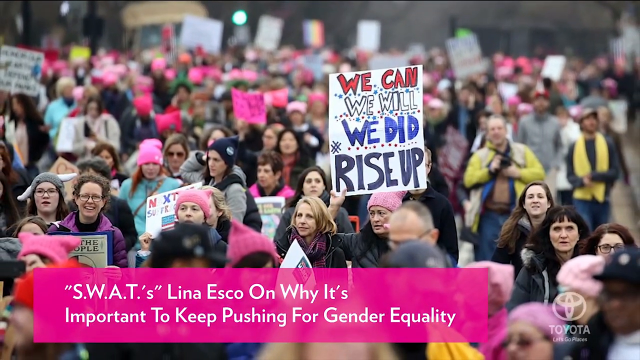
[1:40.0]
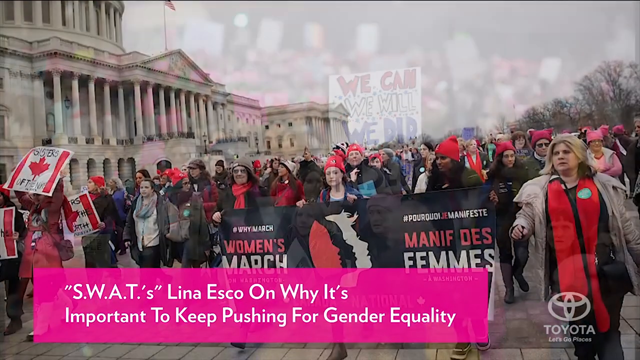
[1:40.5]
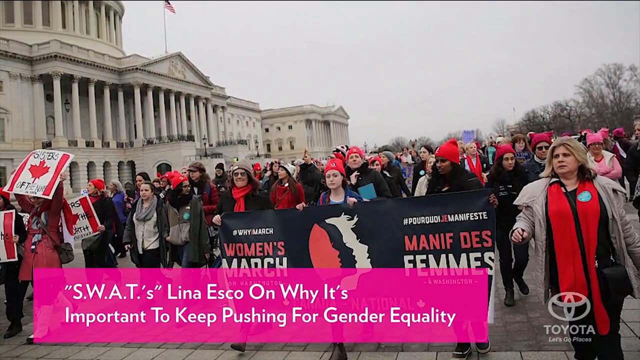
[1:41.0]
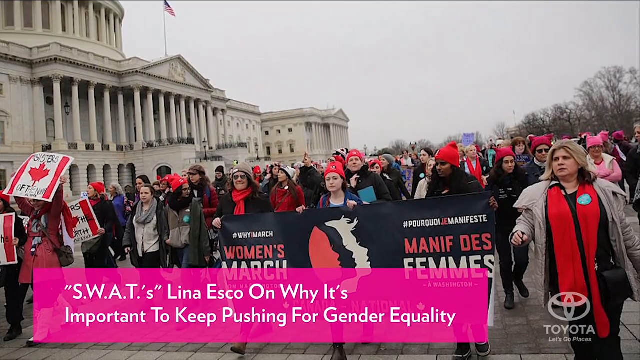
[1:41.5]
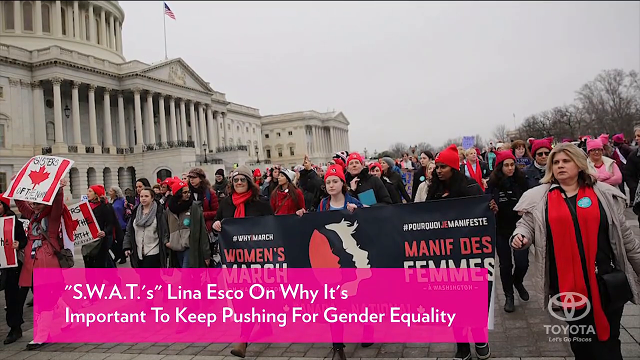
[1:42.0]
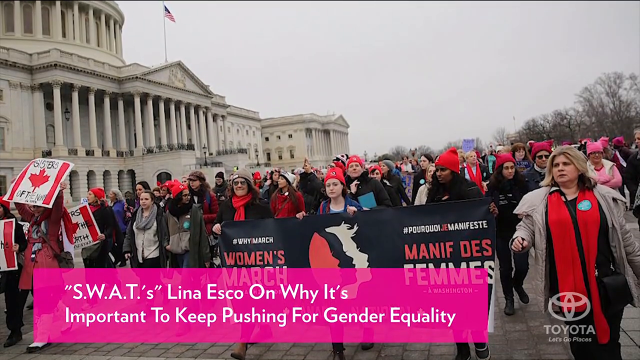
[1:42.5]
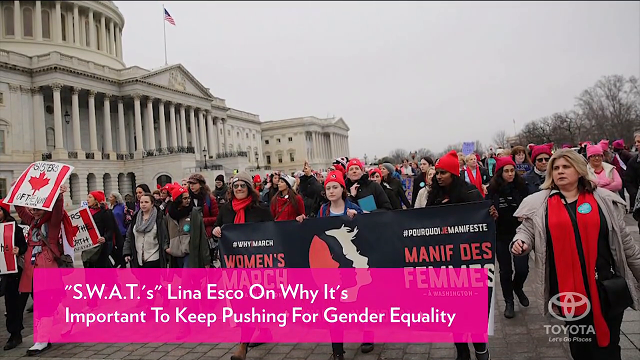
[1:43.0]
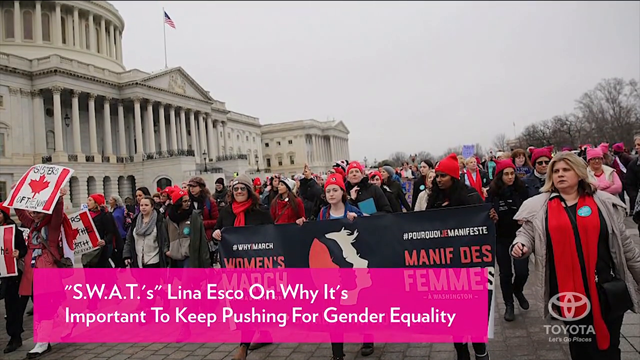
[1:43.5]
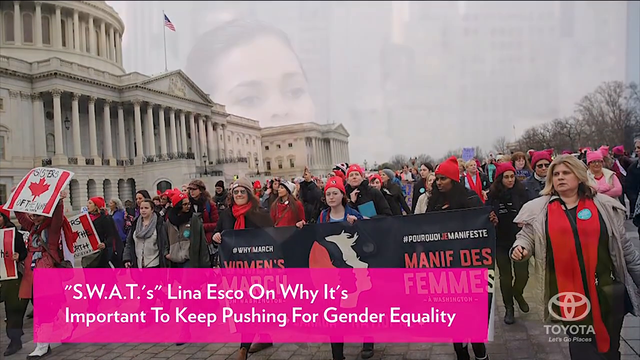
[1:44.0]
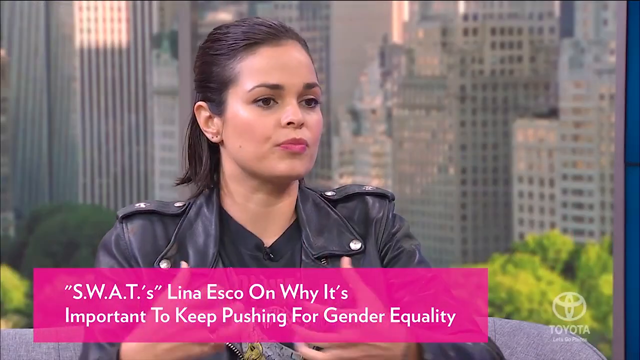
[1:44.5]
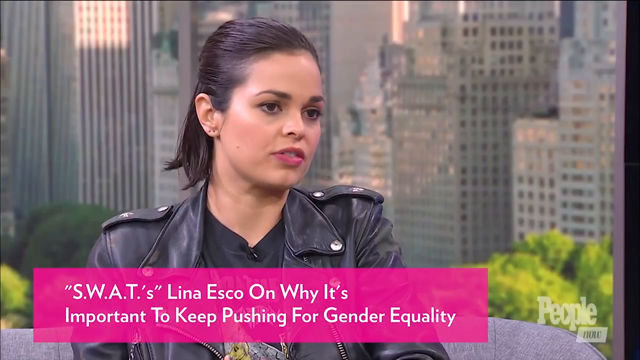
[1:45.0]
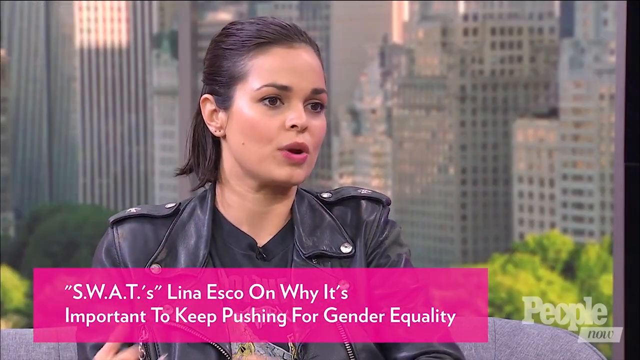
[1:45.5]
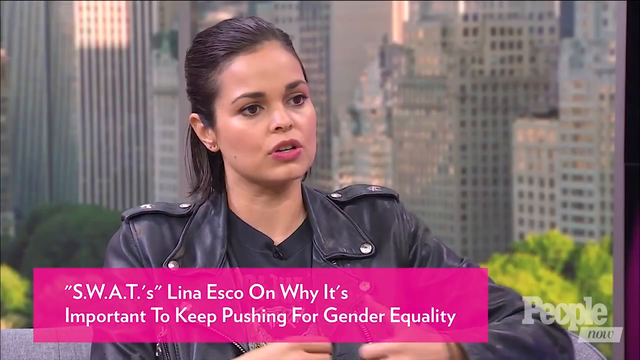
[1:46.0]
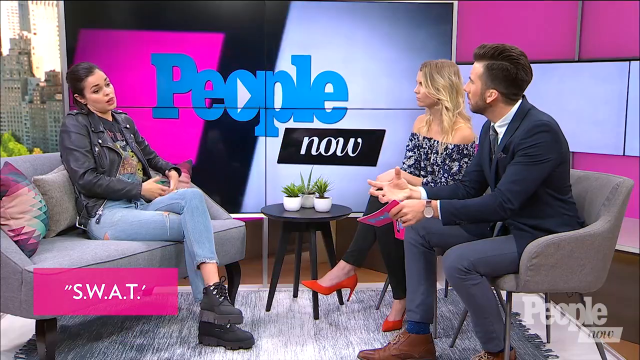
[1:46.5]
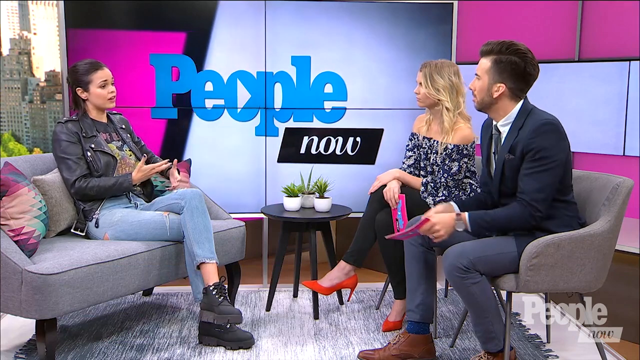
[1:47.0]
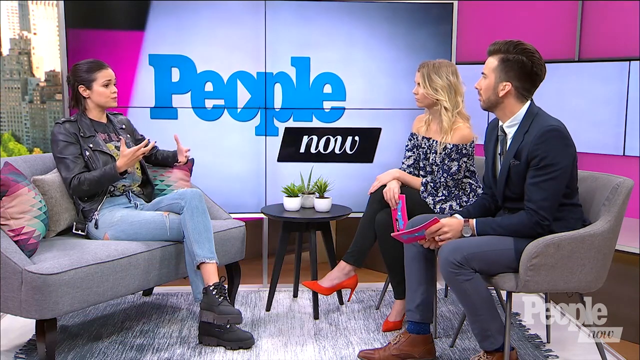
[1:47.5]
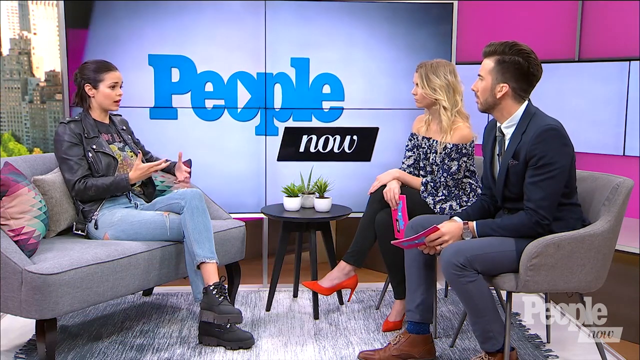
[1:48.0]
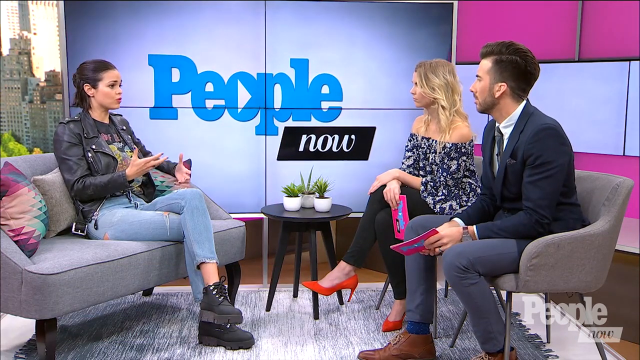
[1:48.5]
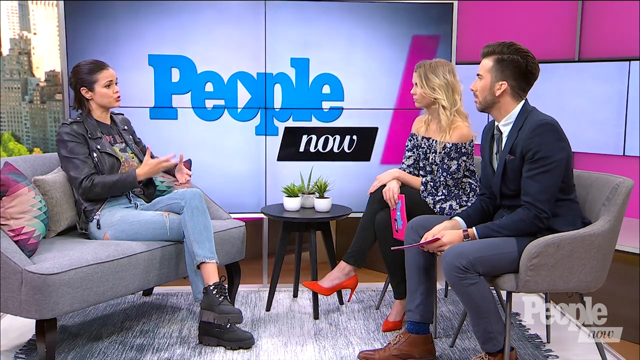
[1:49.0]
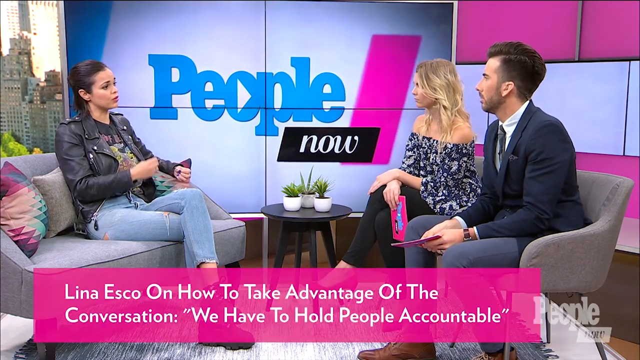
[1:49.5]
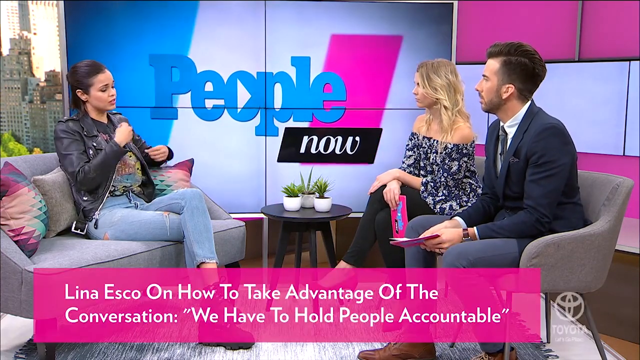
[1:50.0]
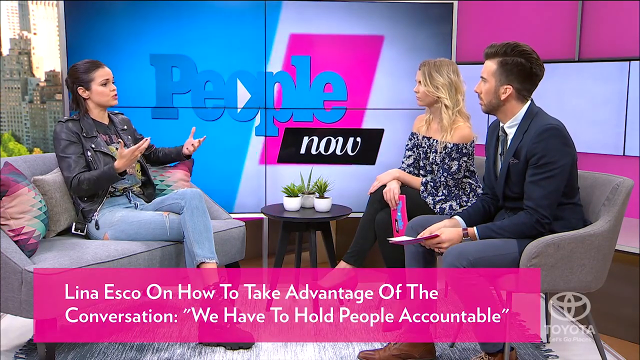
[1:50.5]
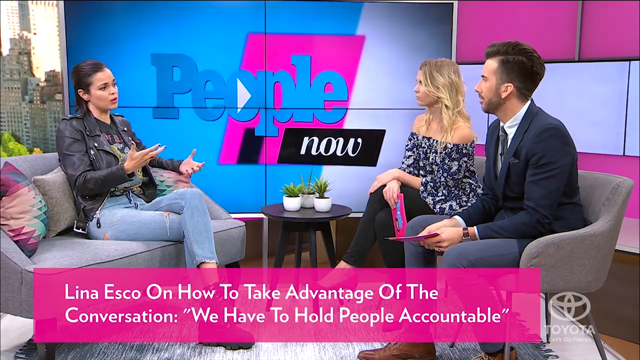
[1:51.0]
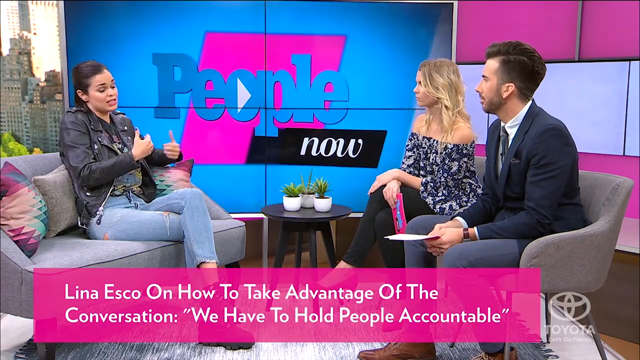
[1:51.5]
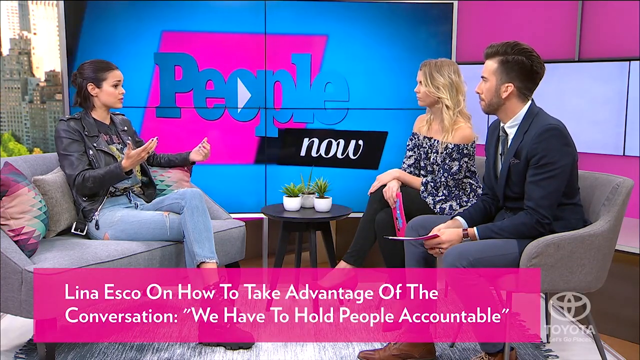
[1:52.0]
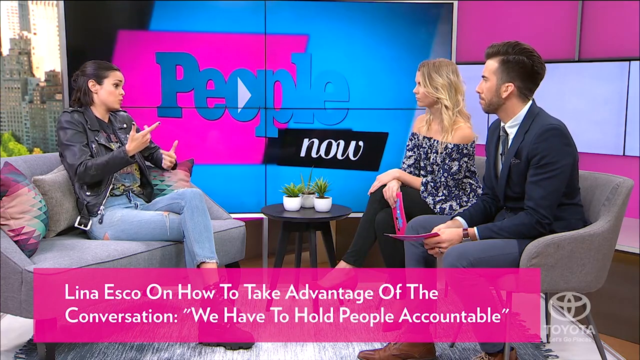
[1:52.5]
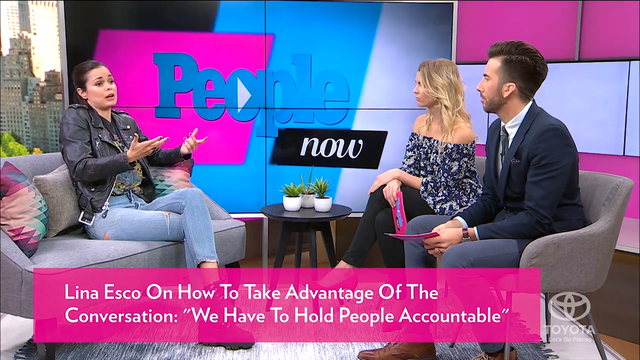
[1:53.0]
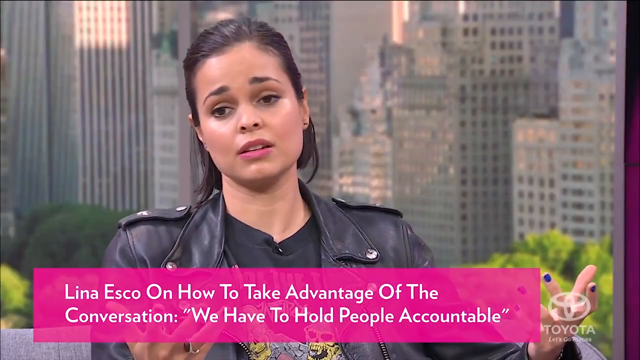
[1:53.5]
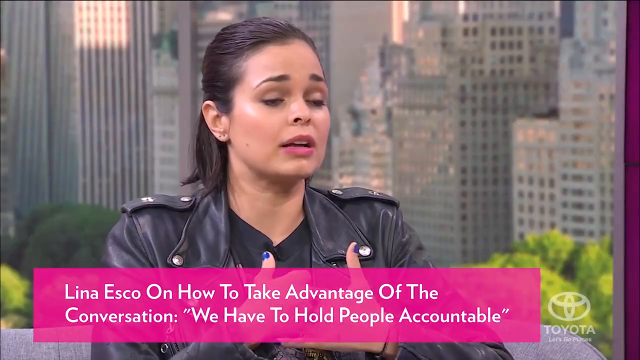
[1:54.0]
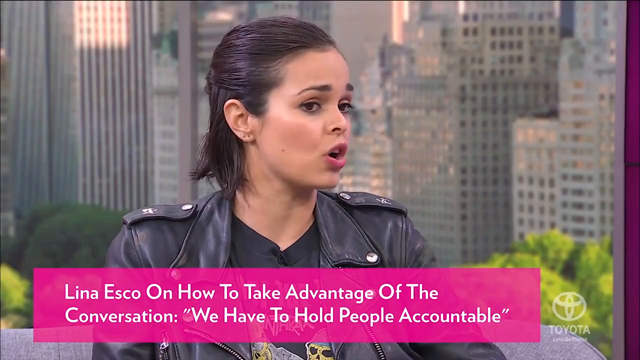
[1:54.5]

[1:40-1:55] People are still shown protesting as the camera moves. Most of the protesters wear black and red and hold different placards up in the air; the writing on some does not look like English and cannot be read, while one placard shows the word "women". Something that looks like a Canadian flag is visible, suggesting the protest may be in Canada. The scene moves back to the studio, where the actress is being interviewed by the two others, a white woman and a white man, and they are all talking. The interviewee wears jeans, a black shirt inside a leather jacket, and black boots.